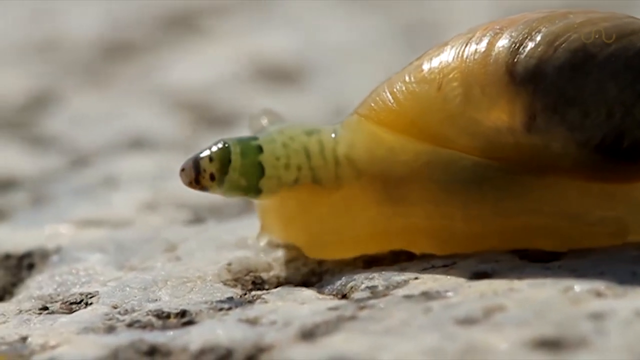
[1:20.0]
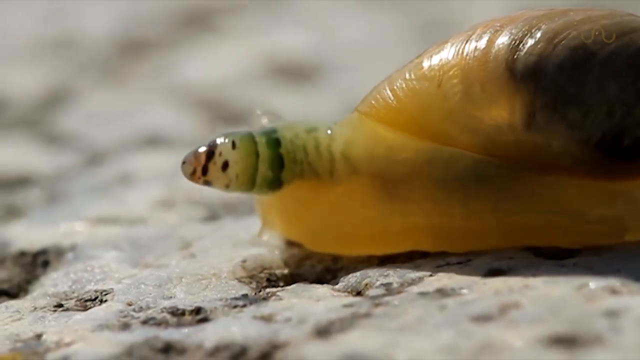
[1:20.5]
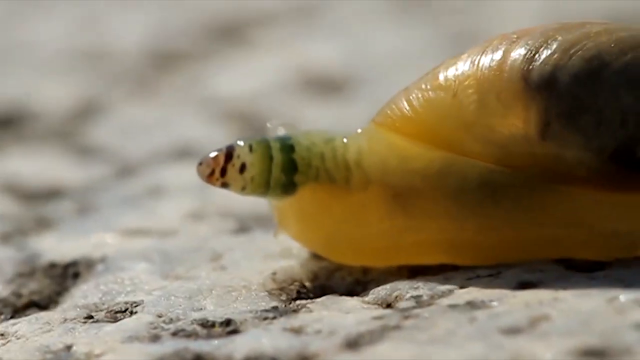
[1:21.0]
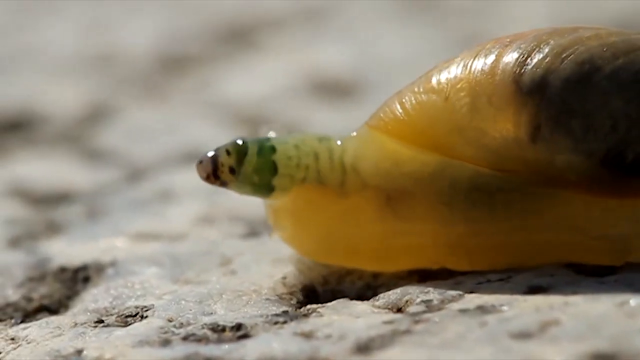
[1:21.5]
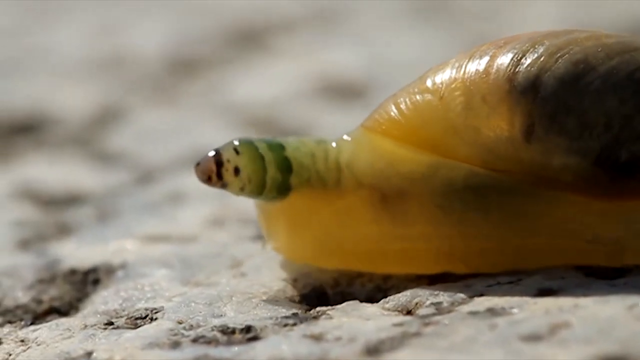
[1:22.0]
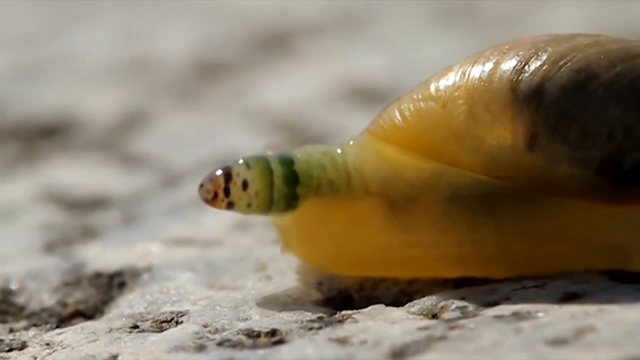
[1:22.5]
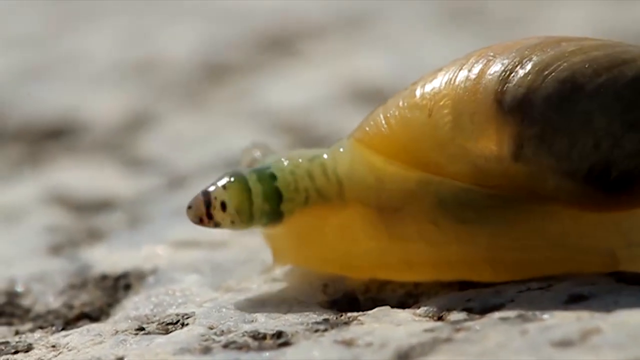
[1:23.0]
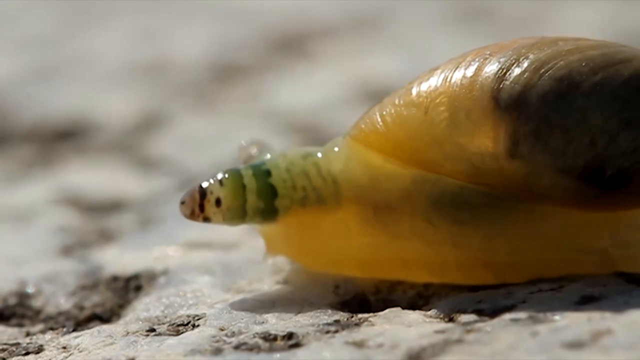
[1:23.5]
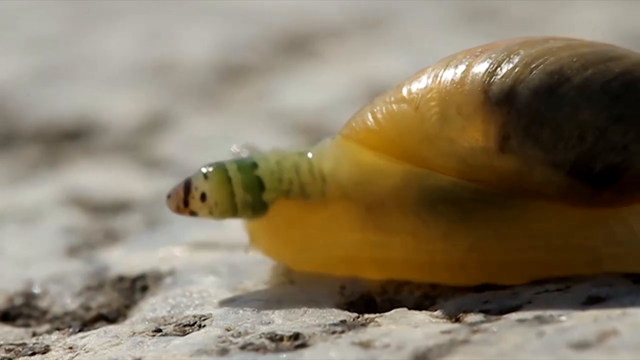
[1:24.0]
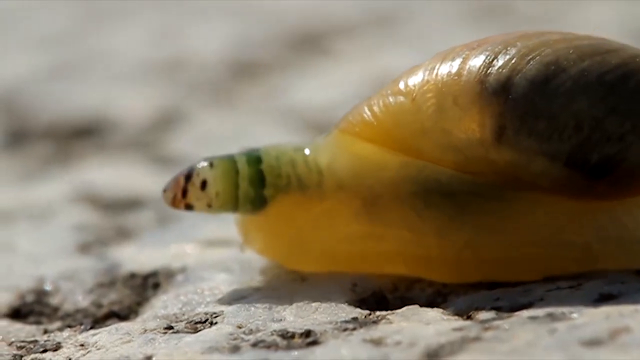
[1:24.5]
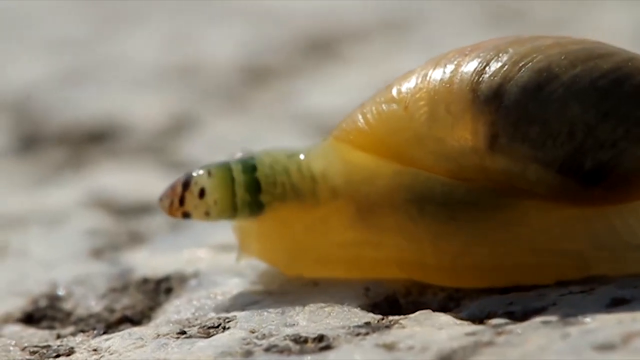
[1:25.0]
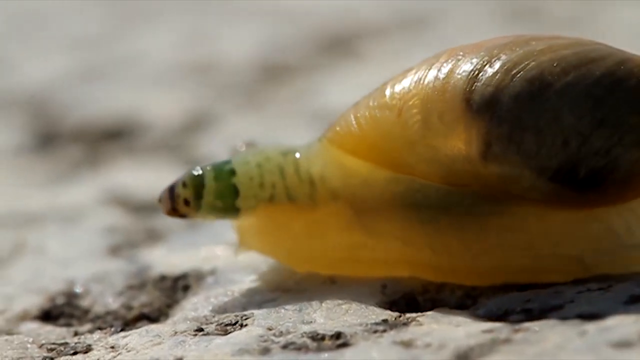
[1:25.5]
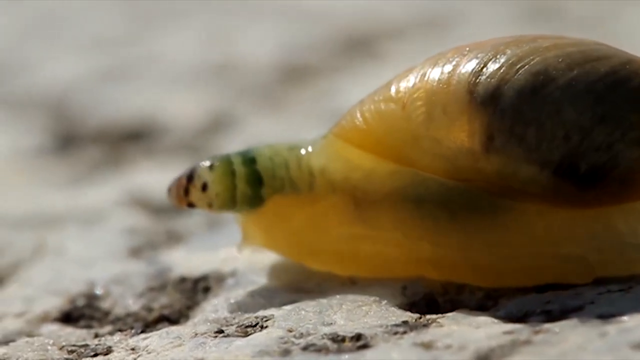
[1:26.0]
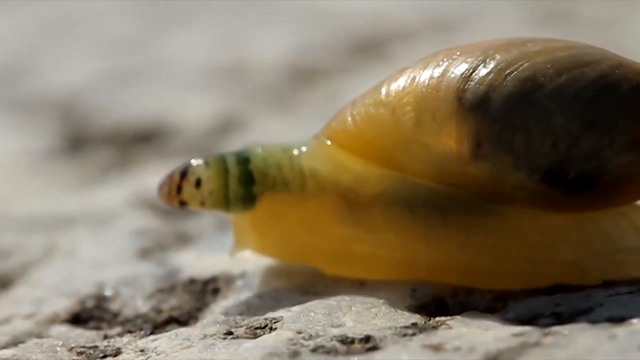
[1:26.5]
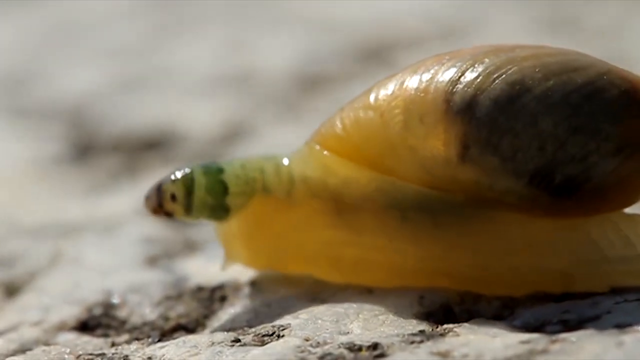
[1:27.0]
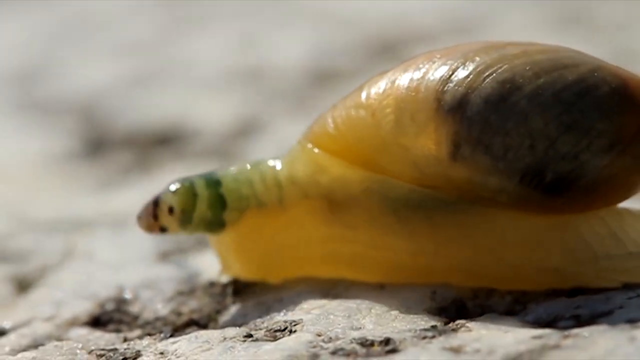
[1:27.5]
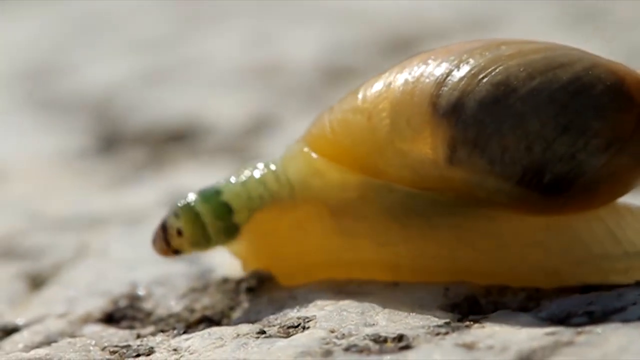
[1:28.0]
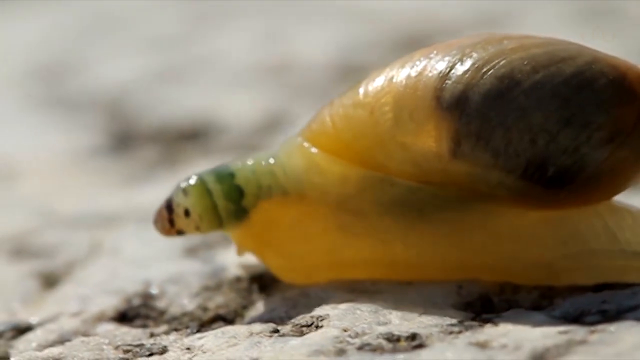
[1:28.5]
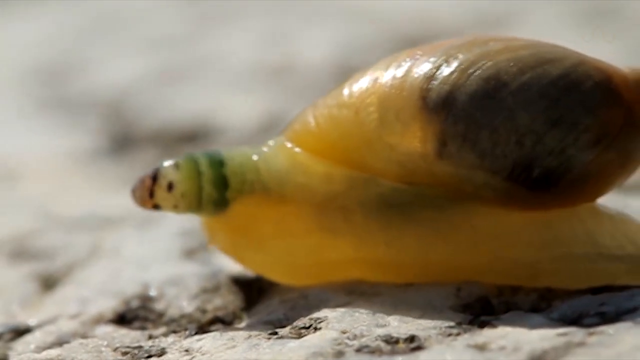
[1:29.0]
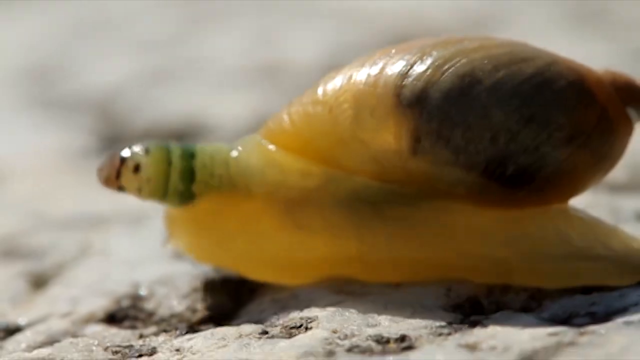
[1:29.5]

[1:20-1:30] A snail-like creature glides across what looks like a rocky surface, heading toward the left, its two antennae sort of pumping. The tip of each antenna is somewhat gray, followed by a stripe of brown, a beige area with polka dots, light green, slightly darker green, a line of black and then beige. The middle part of the body is more opaque, sort of brown and see-through, and the back part is a deeper brown. The creature makes slow progress toward the left while it keeps pumping the antennae at the top.